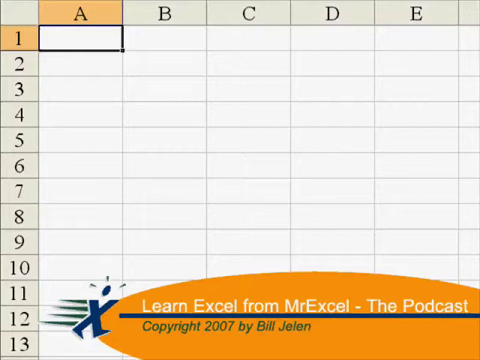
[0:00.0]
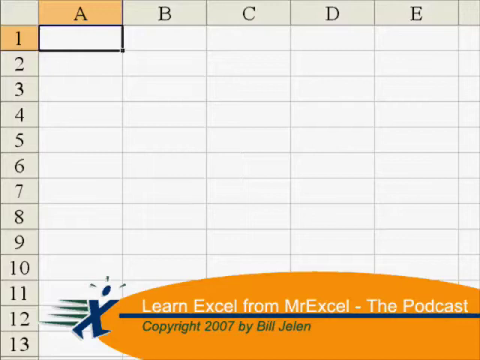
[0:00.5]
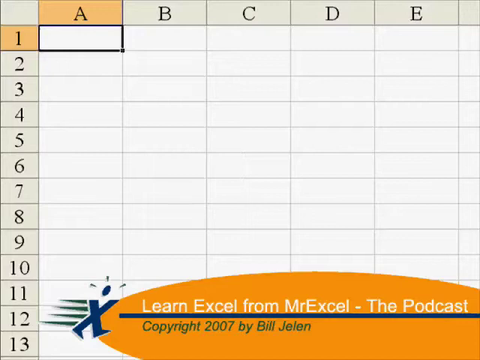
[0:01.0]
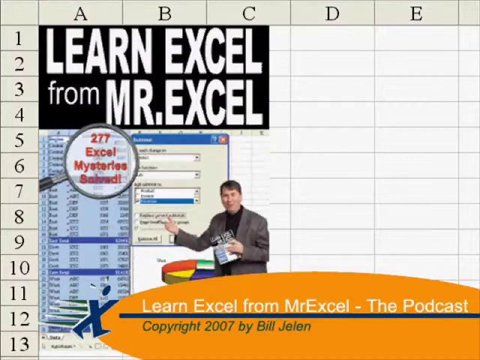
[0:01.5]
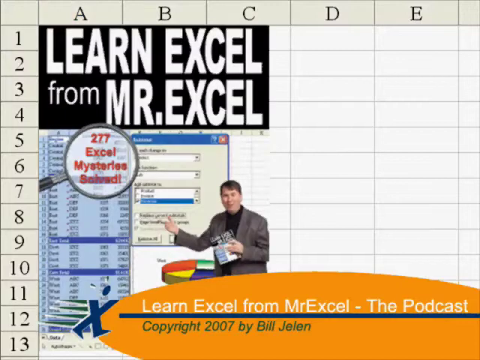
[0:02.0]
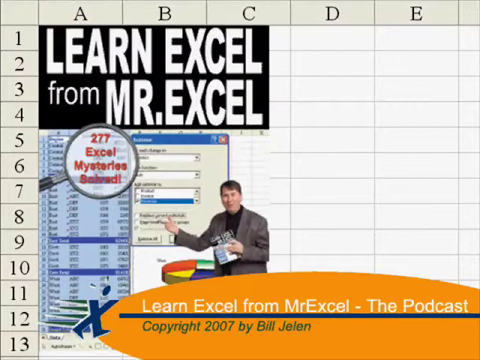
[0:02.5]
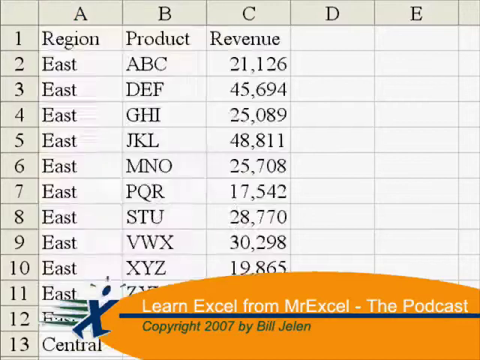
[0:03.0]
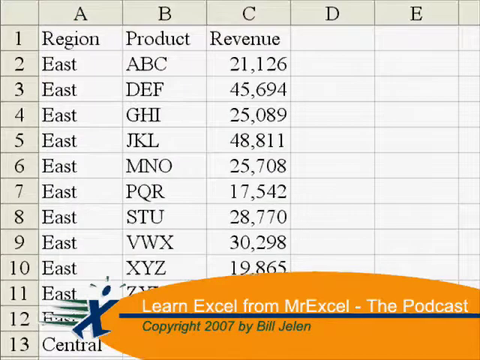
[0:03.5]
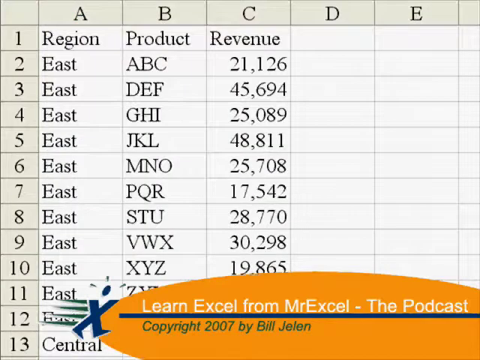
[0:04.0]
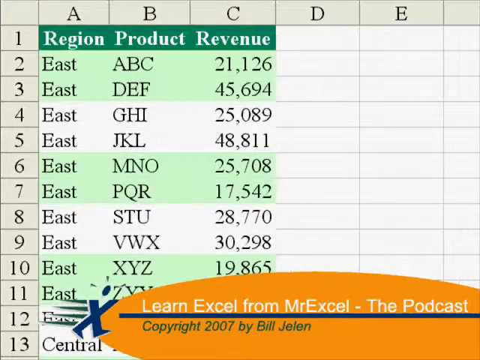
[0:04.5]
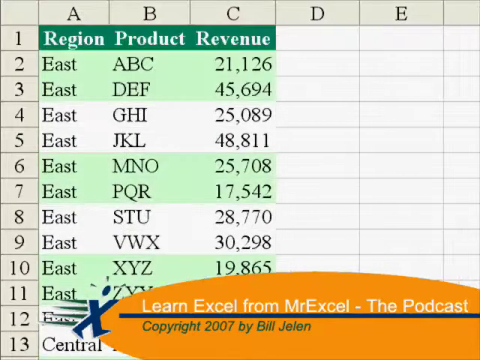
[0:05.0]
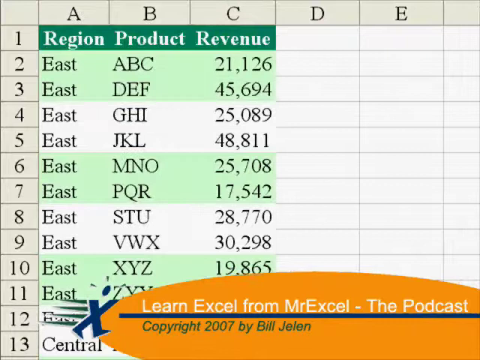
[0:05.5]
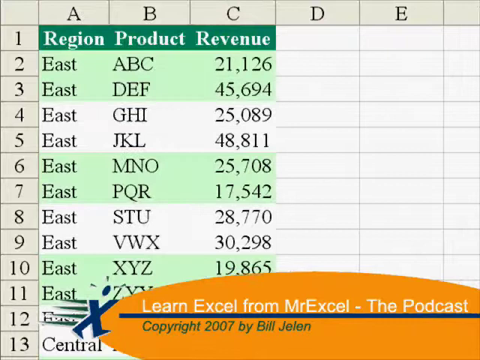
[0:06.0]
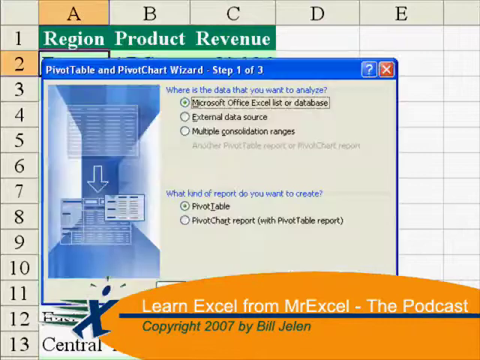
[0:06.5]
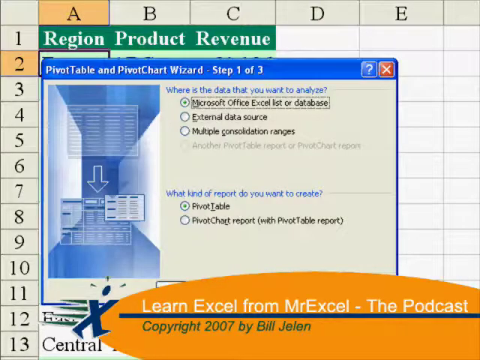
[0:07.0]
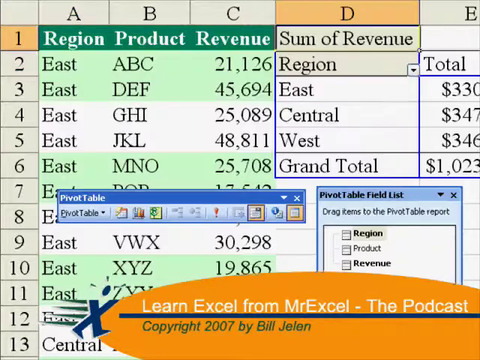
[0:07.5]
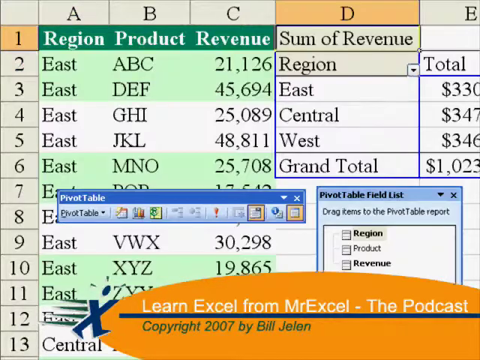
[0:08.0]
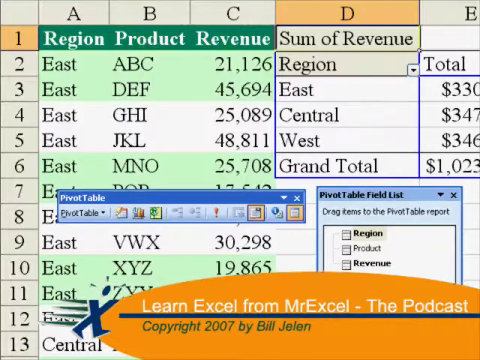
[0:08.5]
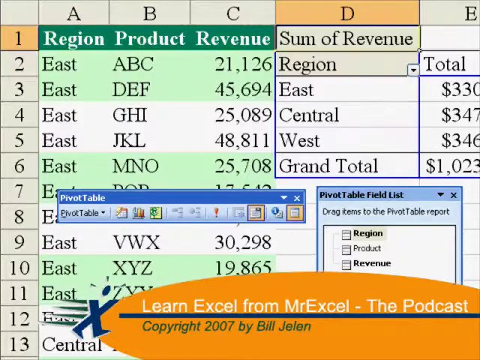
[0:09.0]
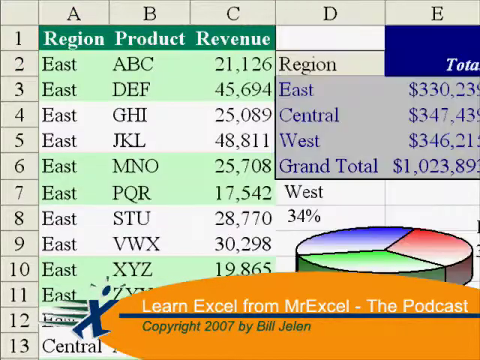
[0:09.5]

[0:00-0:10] An Excel sheet shows a graph with columns labeled A, B, C, D and E across the top and rows numbered 1 through 13 down the left side. Box 1A is highlighted. Down below, text reads "Learn Excel from MrExcel-The Podcast". Underneath that is a blue line, and below the blue line the text reads "Copyright 2007 by Bill Jelen". To the left of that is a design that looks like an X with a circle above it, and to the left of the X four lines come out of it, pointing towards rows 12 and 11 on the graph.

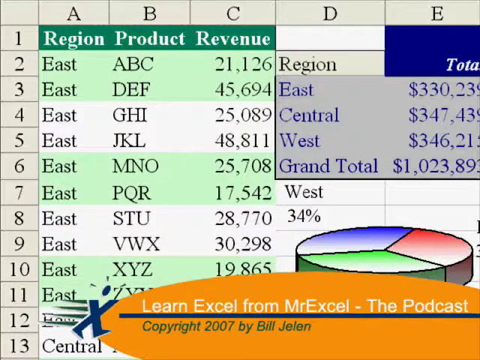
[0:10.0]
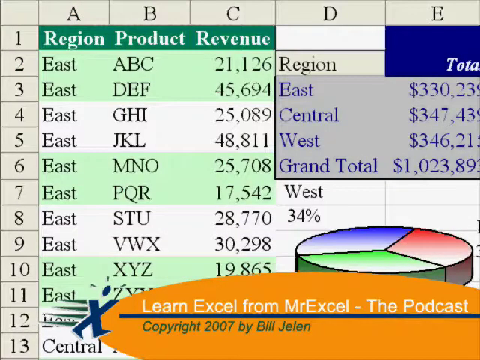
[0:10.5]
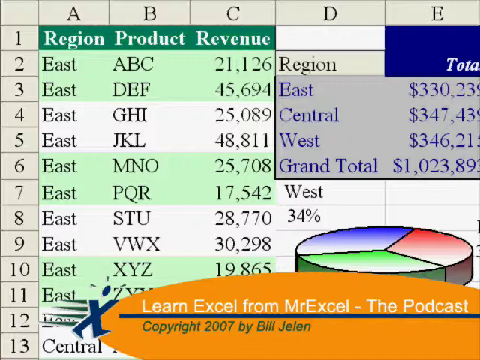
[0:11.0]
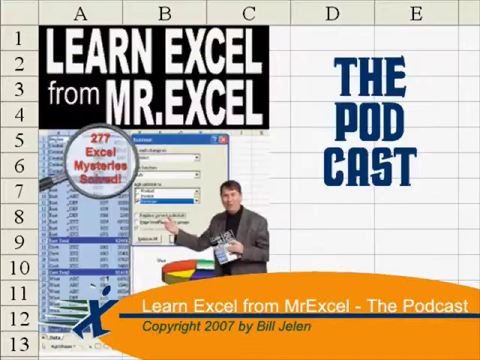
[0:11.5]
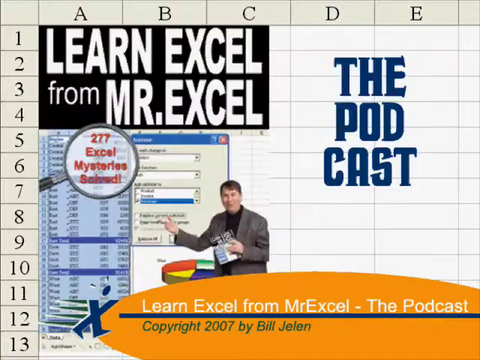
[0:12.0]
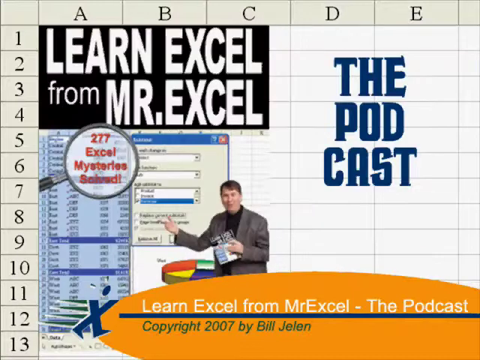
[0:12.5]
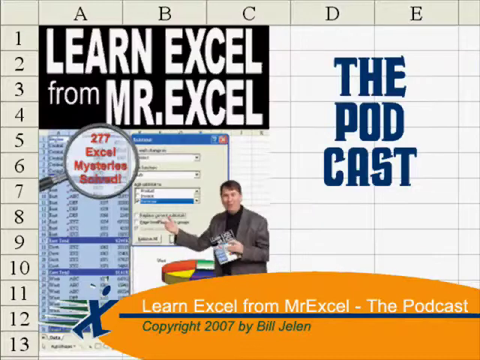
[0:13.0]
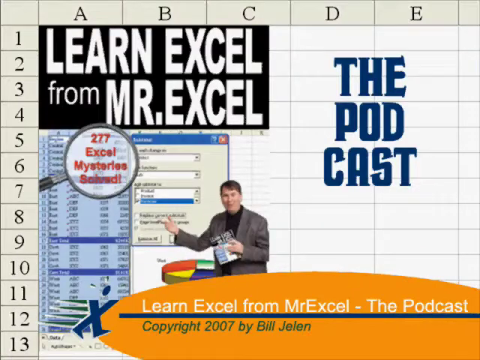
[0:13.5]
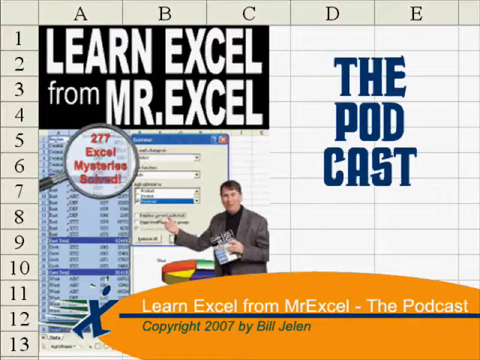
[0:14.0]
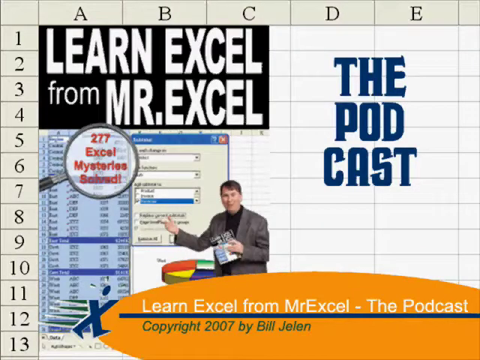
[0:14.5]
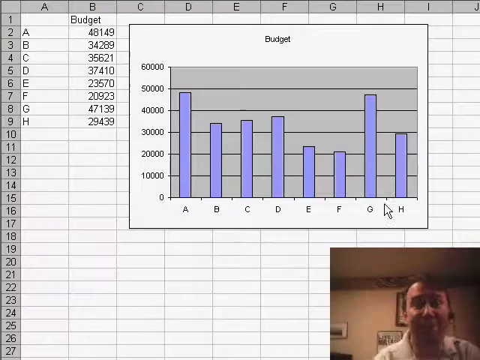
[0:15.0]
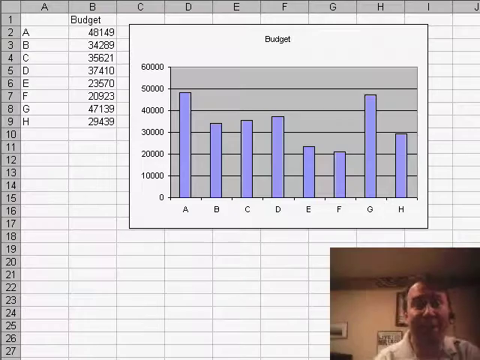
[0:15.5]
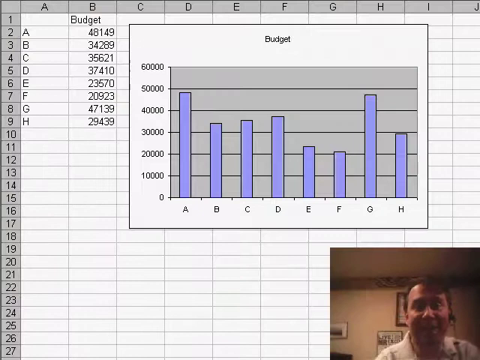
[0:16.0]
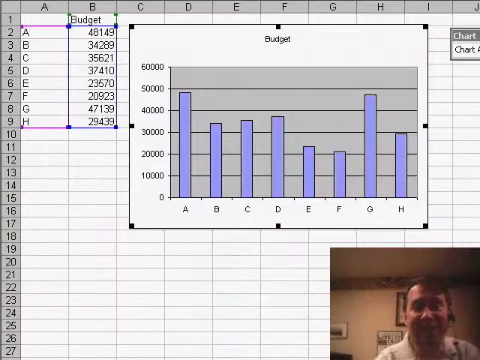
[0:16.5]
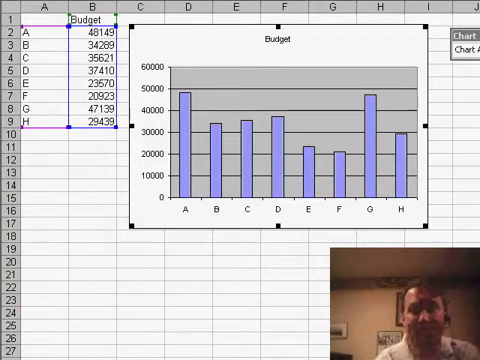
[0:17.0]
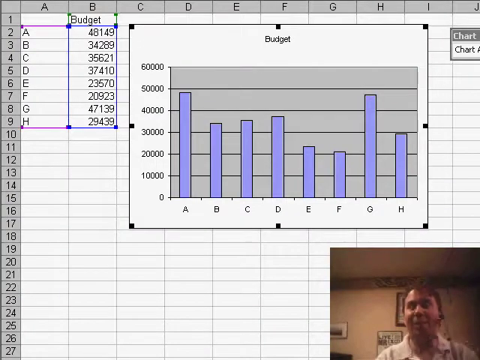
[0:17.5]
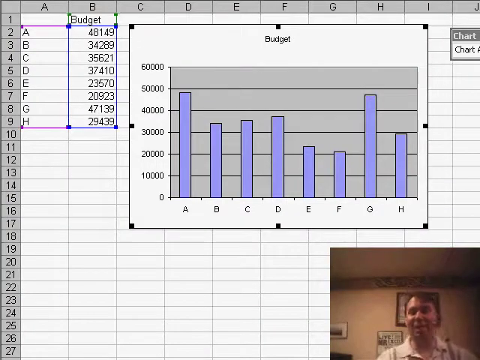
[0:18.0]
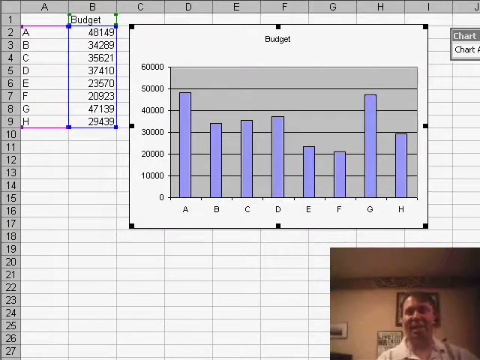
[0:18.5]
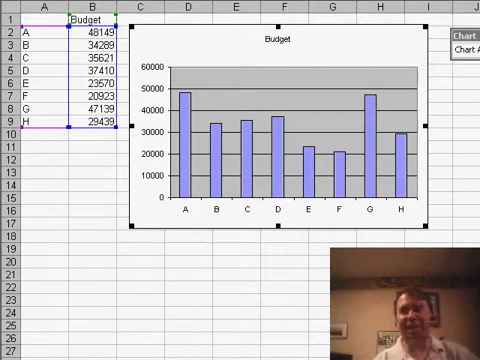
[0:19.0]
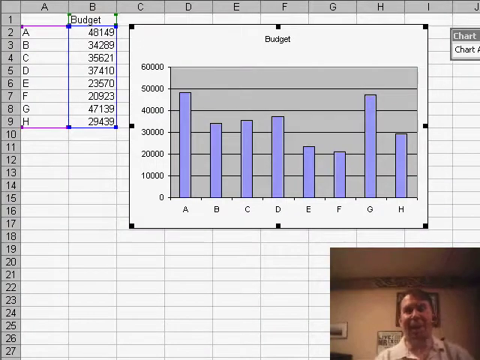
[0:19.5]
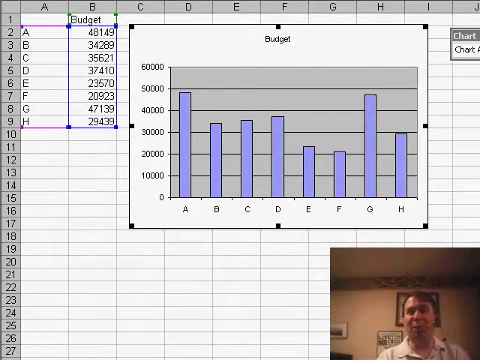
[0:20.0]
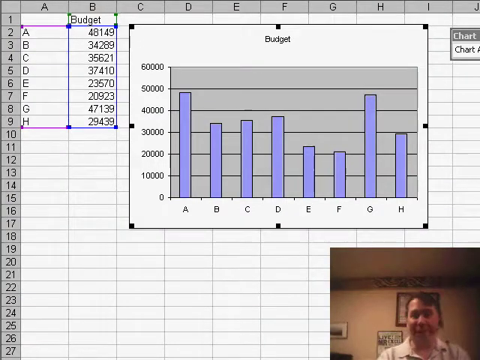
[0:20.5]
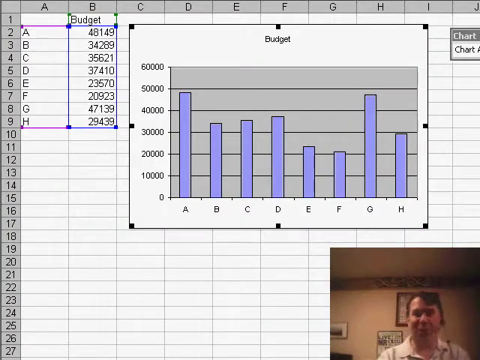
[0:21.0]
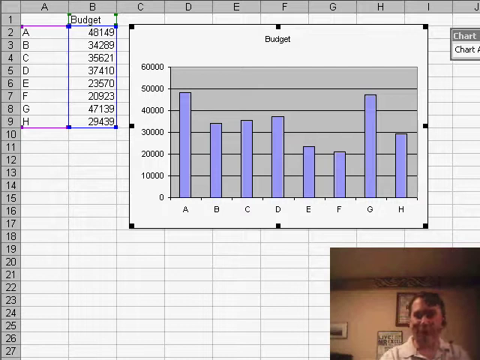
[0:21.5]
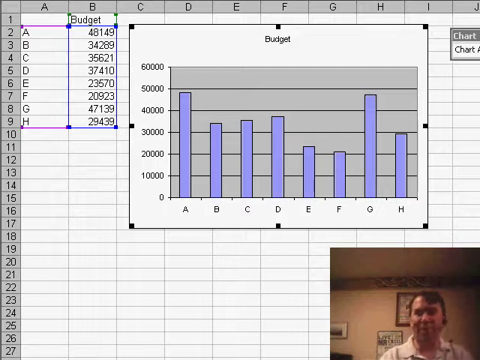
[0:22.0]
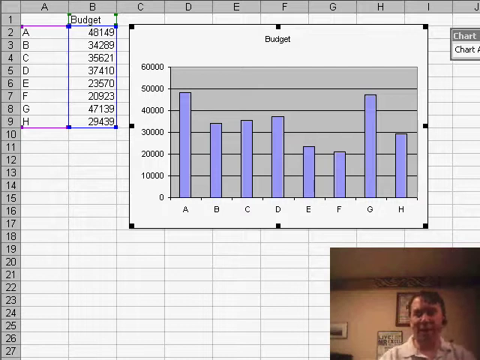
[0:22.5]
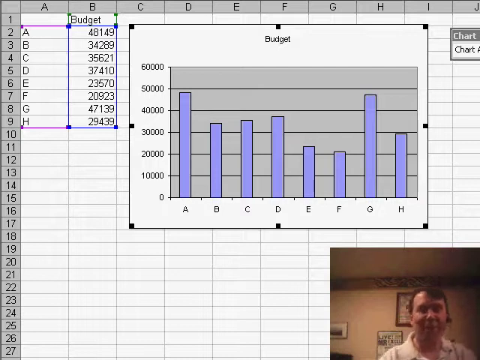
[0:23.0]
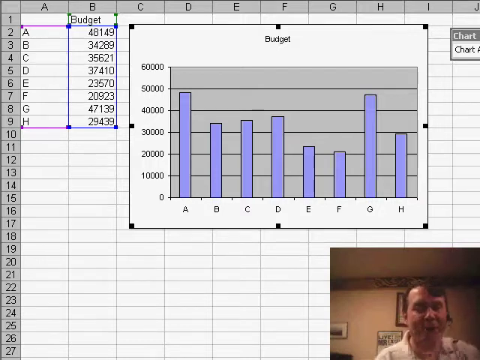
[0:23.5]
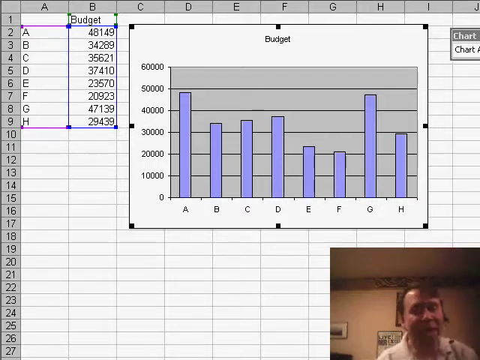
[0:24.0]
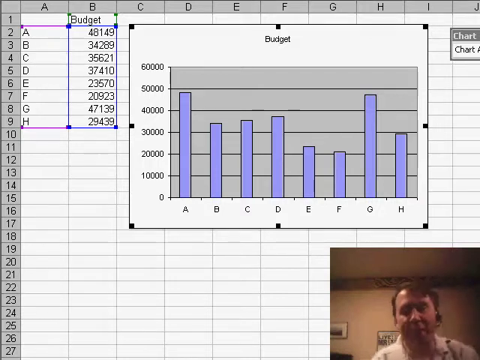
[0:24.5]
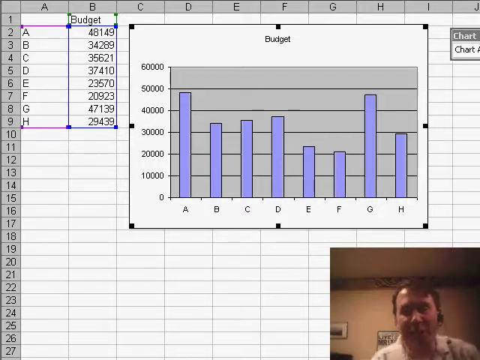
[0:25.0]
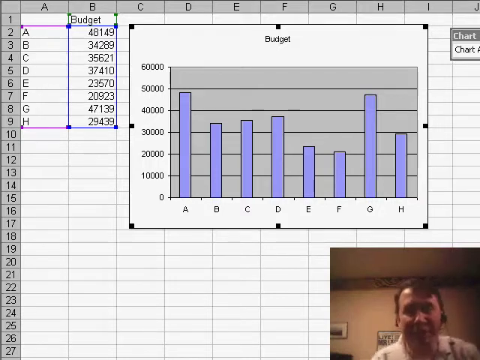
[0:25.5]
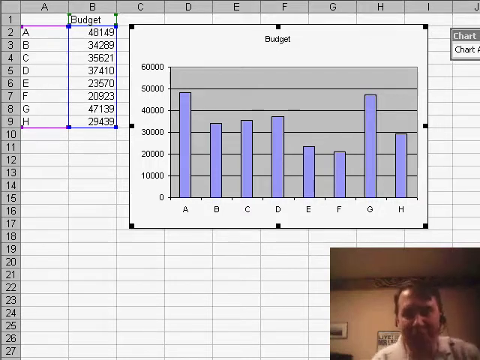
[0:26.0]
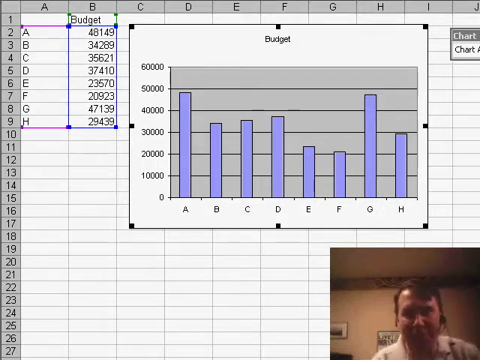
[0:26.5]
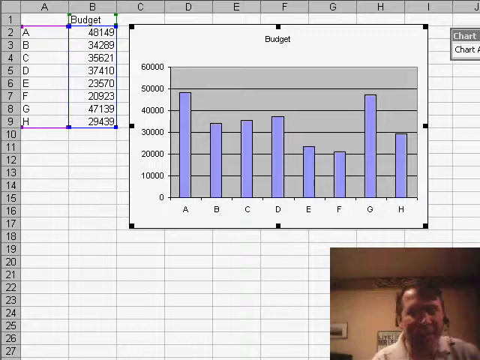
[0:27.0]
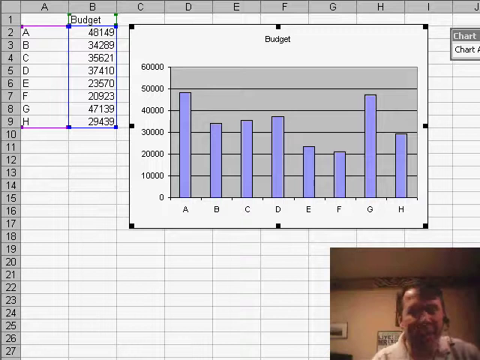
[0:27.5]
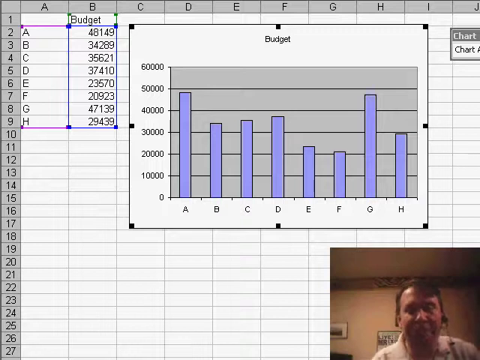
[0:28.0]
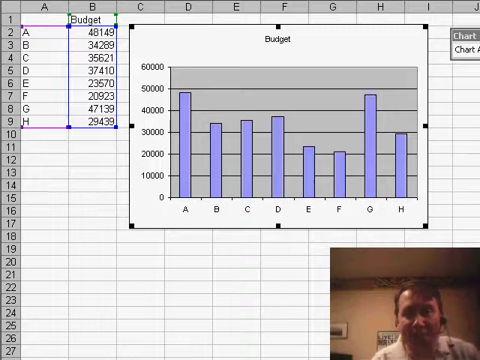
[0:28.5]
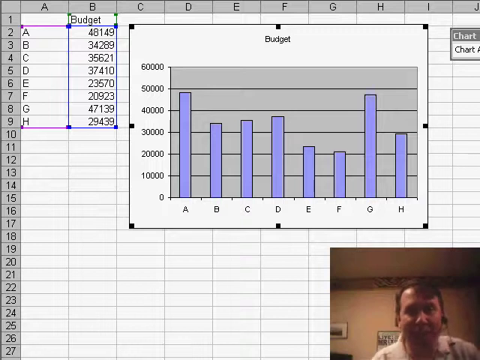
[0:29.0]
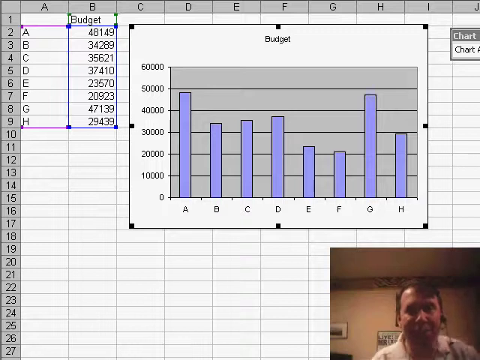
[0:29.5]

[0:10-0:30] An Excel spreadsheet shows columns A, B, C, D and E across the very top of the screen and rows numbered 1 through 13 down the left side. Across the row below A, B and C are the headings region, product and revenue: region under A, product under B and revenue under C. The next screen reads "learn Excel from Mr. Excel" in white writing on a black background. Below the "learn Excel" part is a picture of a man pointing to an open computer screen, as if teaching. Next to that is a magnifying glass over what looks like an Excel spreadsheet, magnifying the number "277" in red, with "Excel" below it and "mysteries solved!" below that. To the right, in blue capital letters stacked on top of each other, are the words "the pod cast". The screen then shows the Excel spreadsheet with the word "budget" typed under column B at the top; down the left side the letters A, B, C, D, E, F, G and H are listed, and below "budget" are different numbers corresponding to those letters. To the right is a bar graph showing what was typed into Excel. In the bottom right corner a small window is open, showing the man wearing a headset and talking.